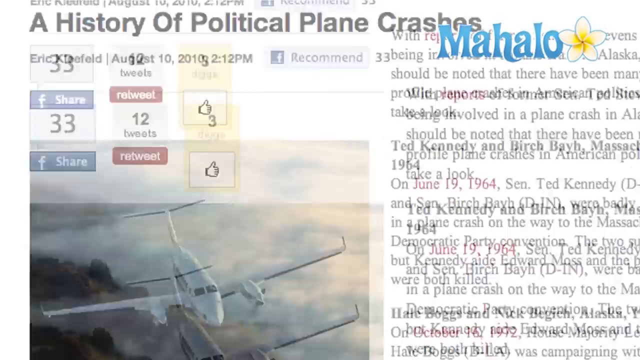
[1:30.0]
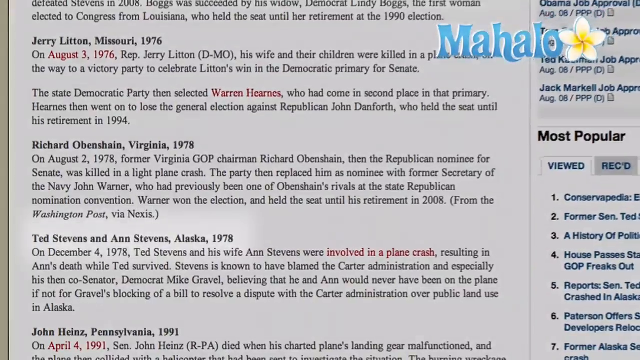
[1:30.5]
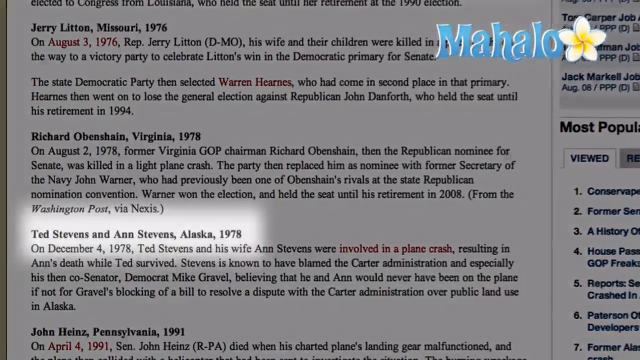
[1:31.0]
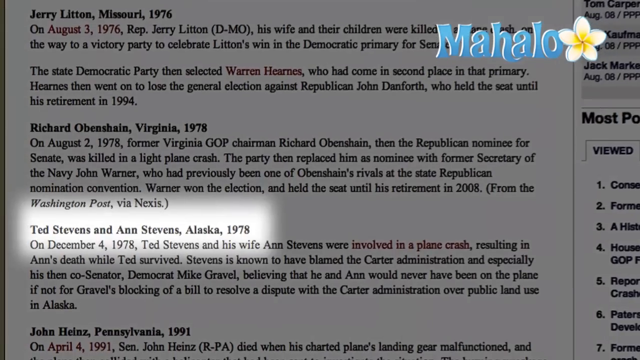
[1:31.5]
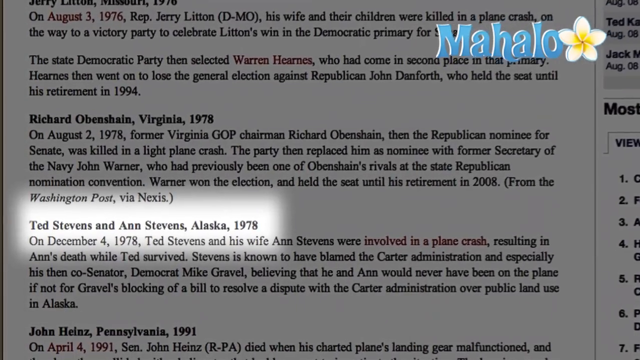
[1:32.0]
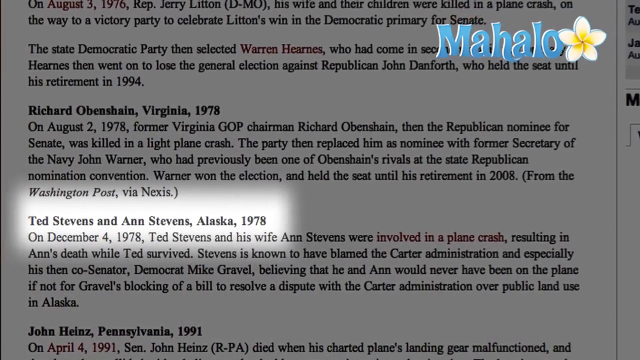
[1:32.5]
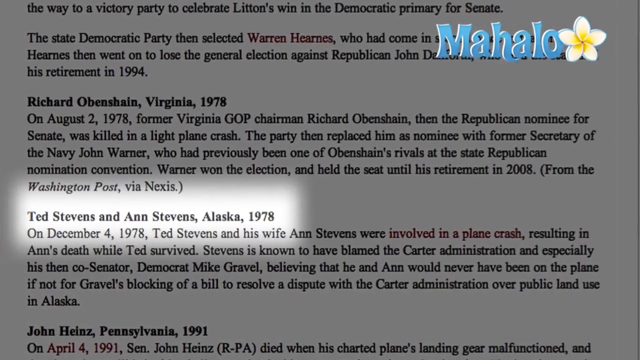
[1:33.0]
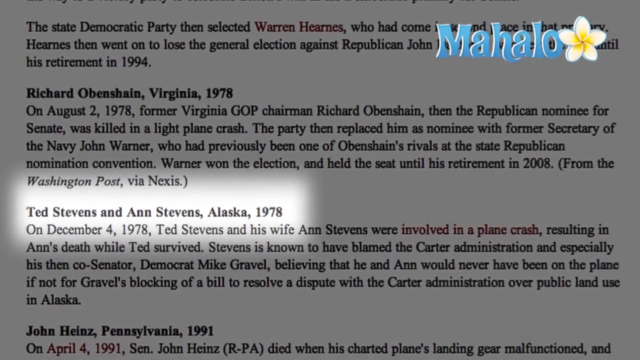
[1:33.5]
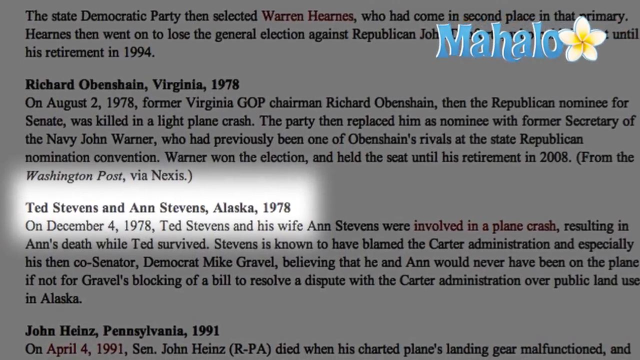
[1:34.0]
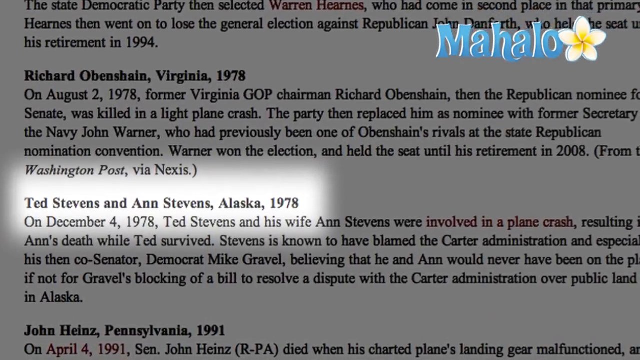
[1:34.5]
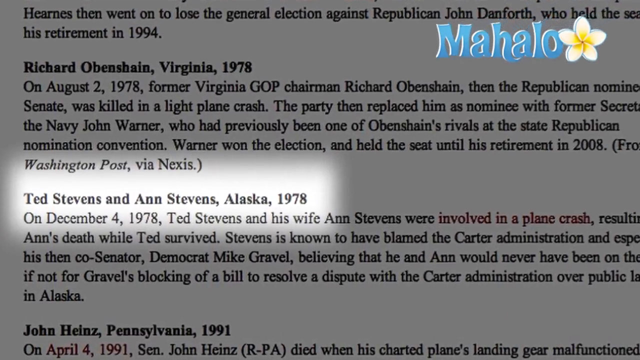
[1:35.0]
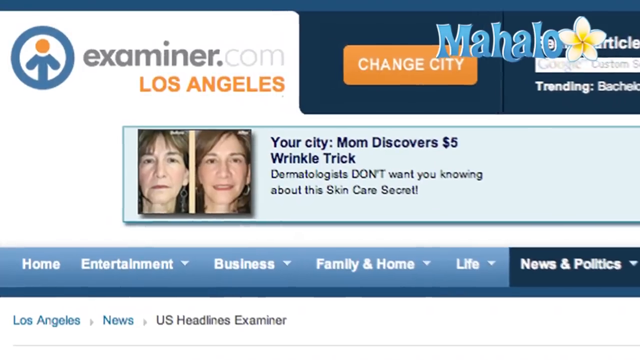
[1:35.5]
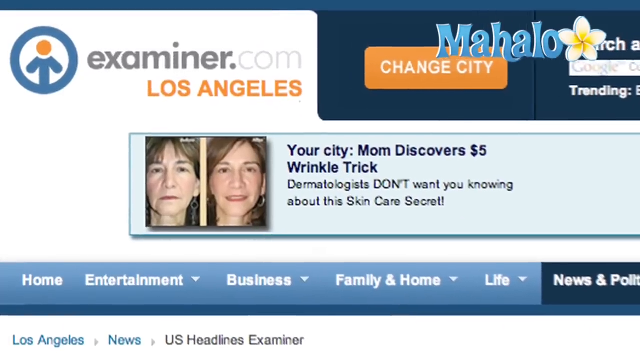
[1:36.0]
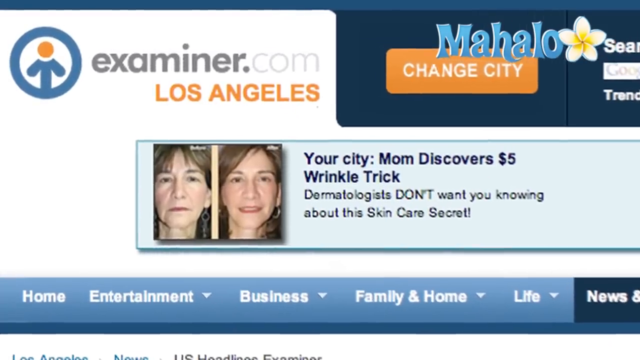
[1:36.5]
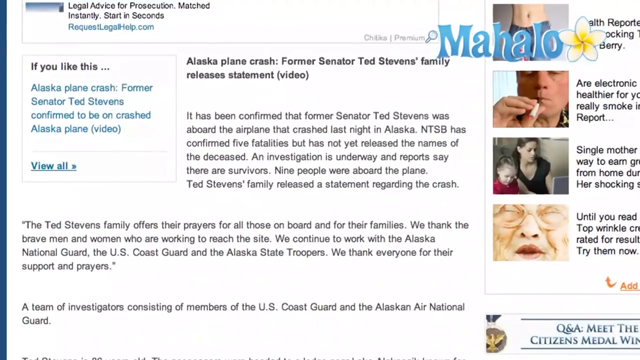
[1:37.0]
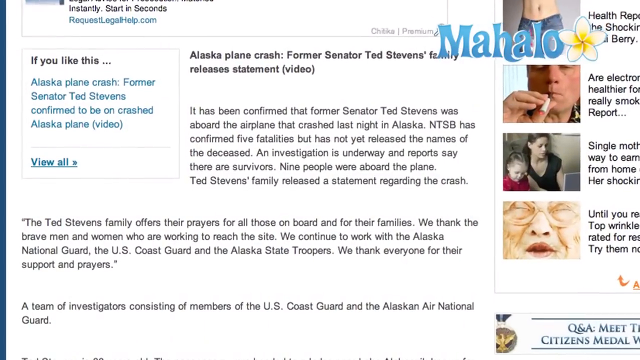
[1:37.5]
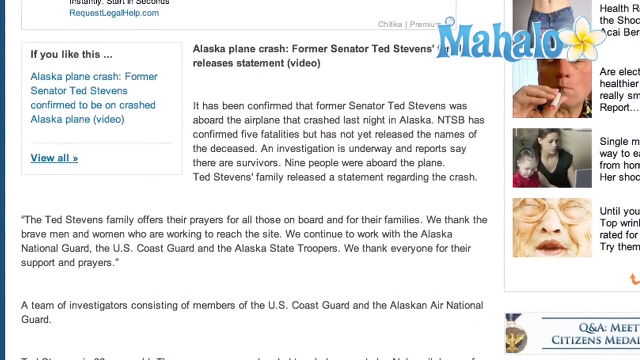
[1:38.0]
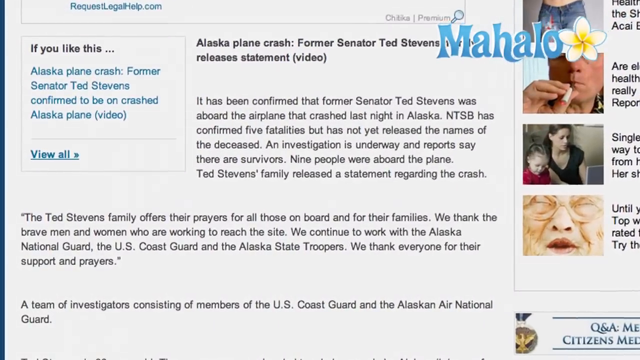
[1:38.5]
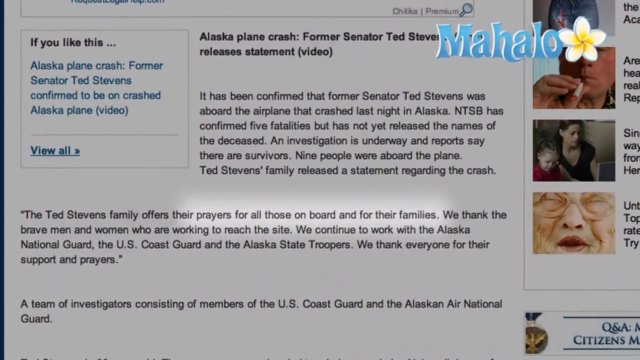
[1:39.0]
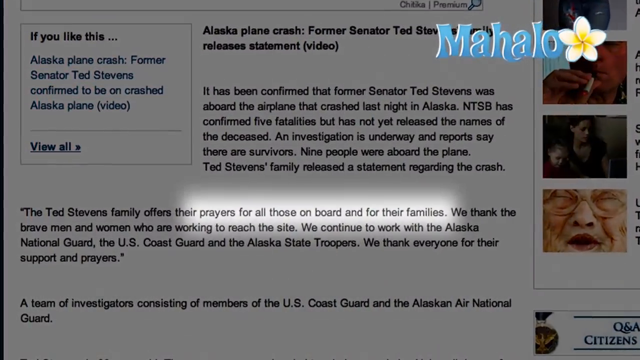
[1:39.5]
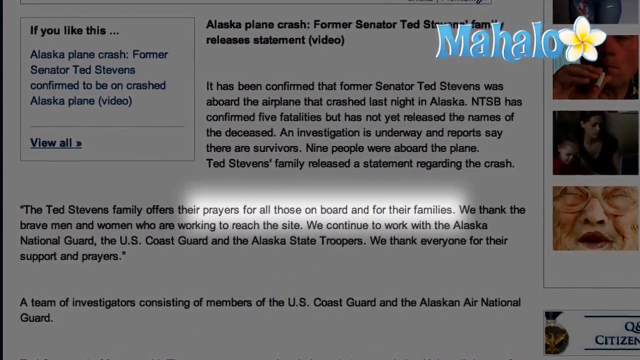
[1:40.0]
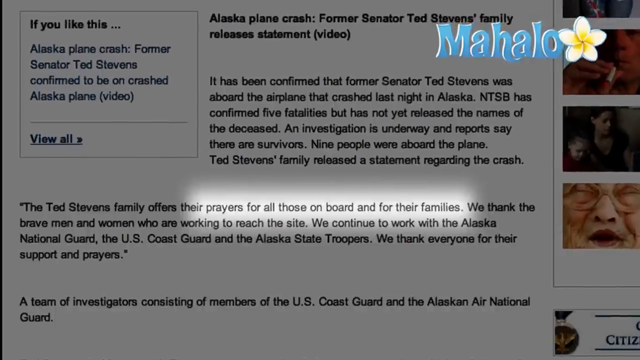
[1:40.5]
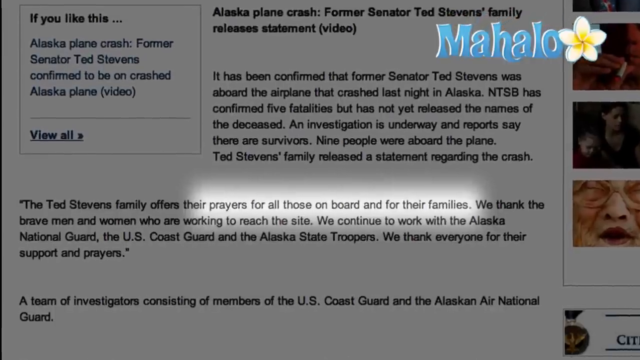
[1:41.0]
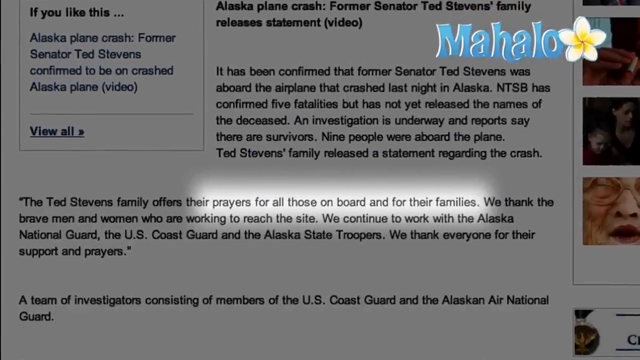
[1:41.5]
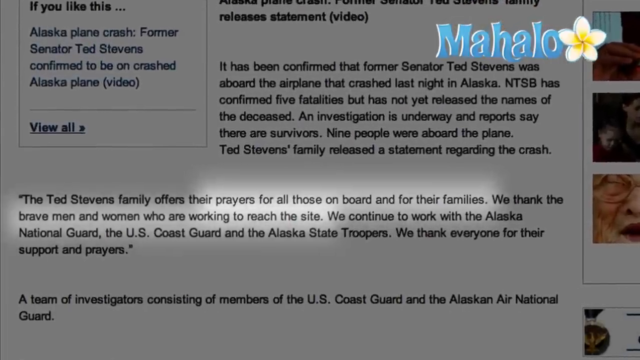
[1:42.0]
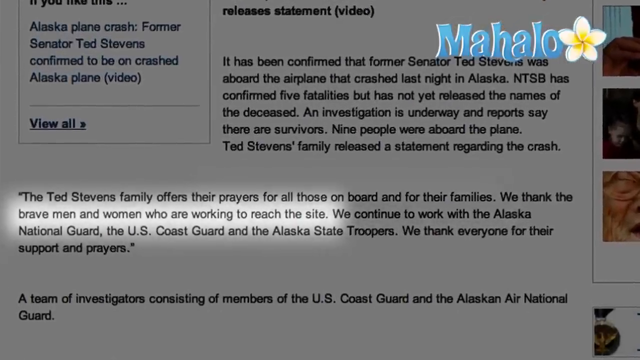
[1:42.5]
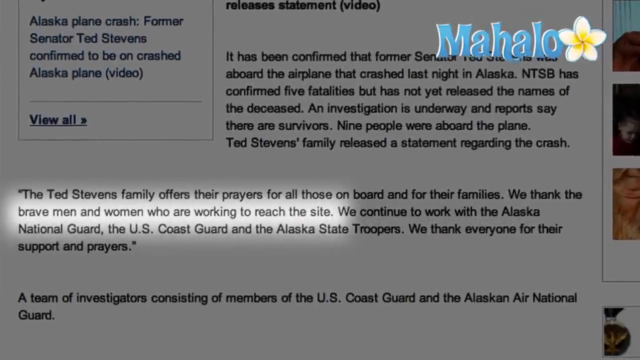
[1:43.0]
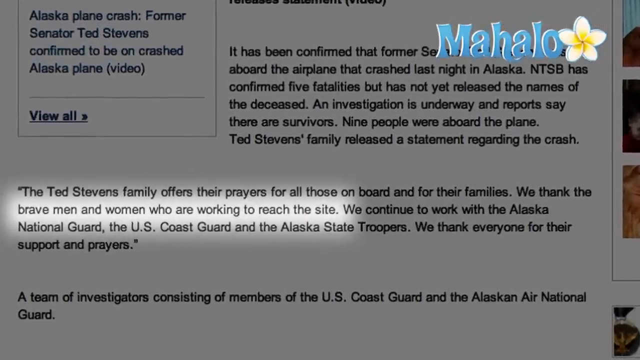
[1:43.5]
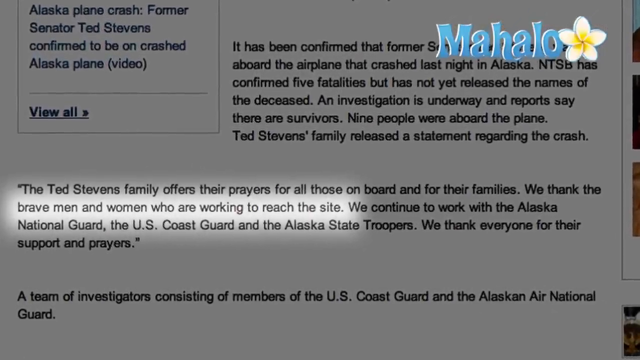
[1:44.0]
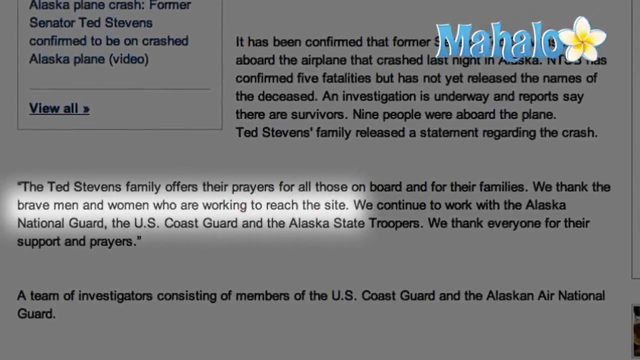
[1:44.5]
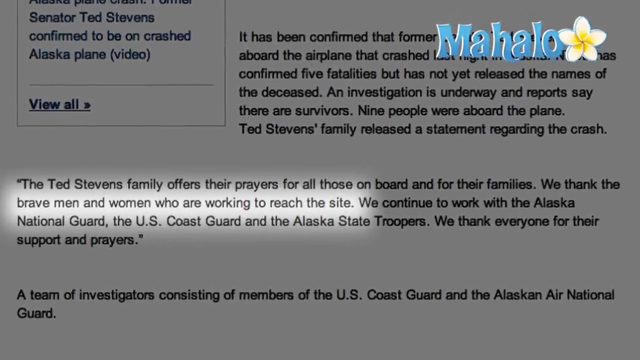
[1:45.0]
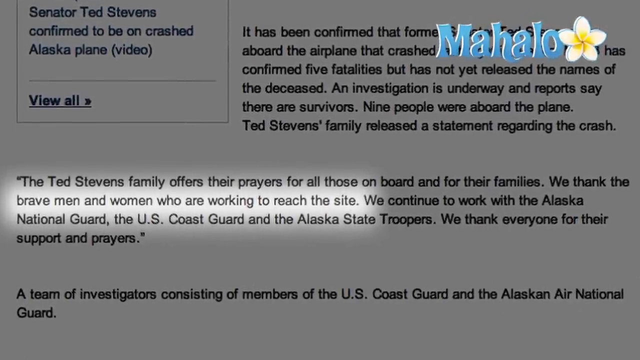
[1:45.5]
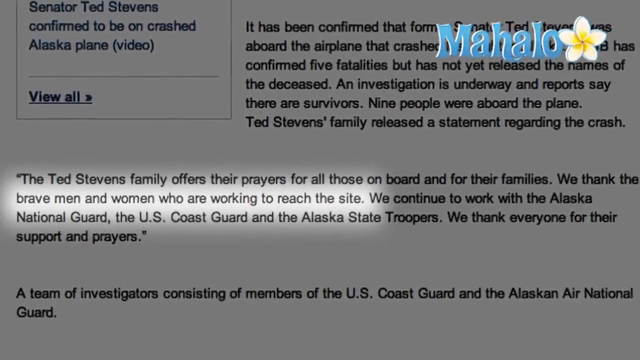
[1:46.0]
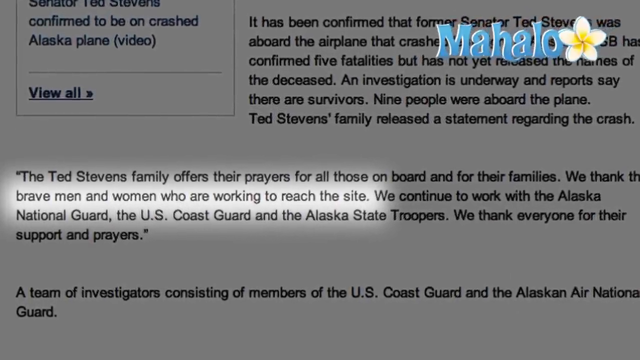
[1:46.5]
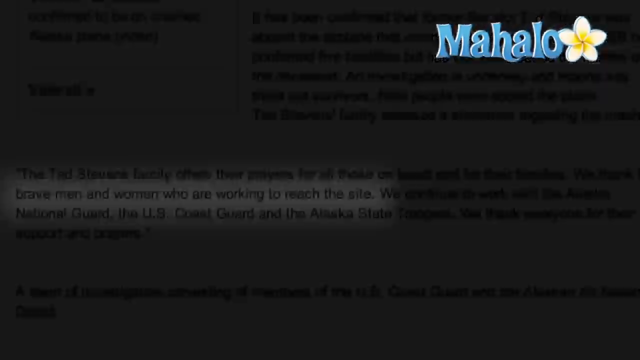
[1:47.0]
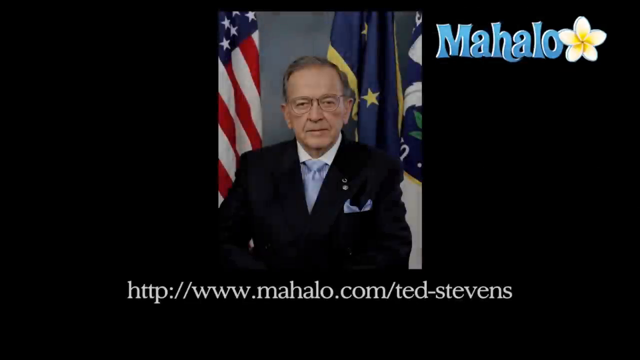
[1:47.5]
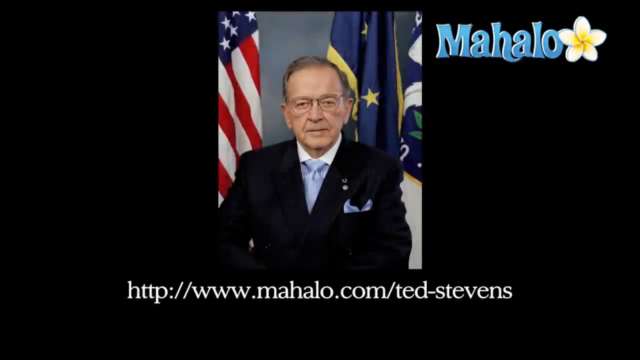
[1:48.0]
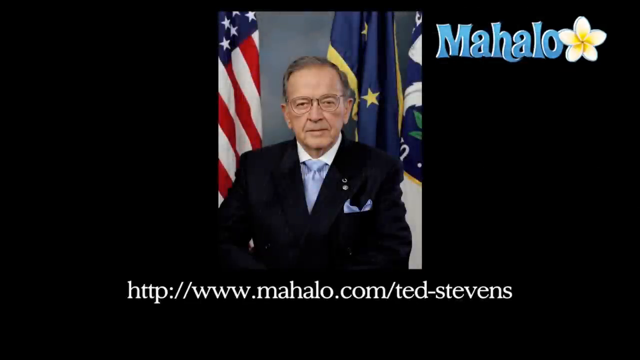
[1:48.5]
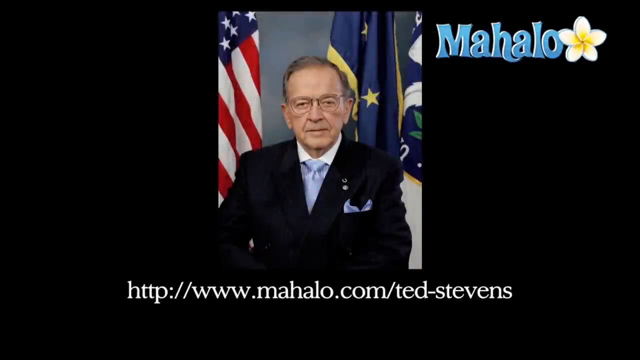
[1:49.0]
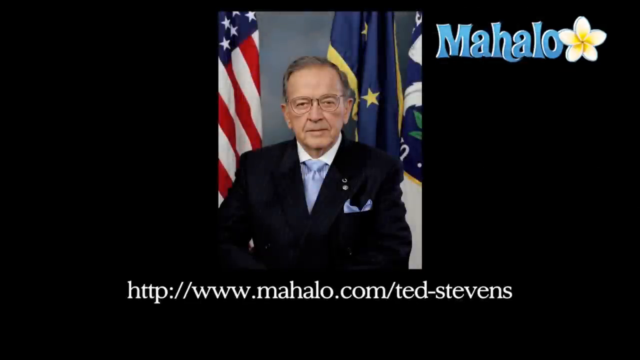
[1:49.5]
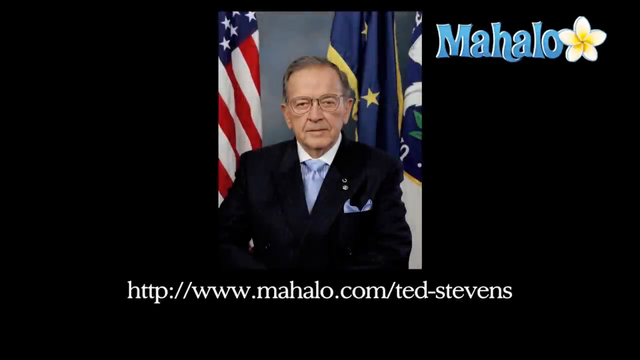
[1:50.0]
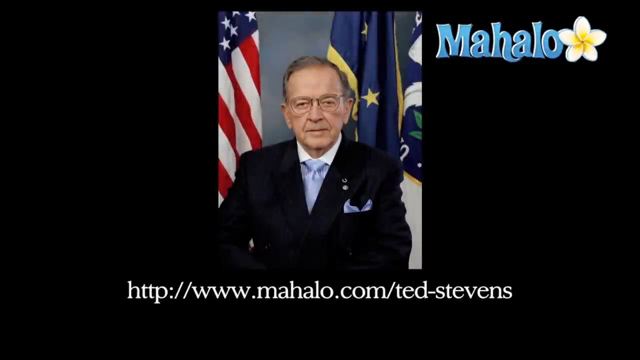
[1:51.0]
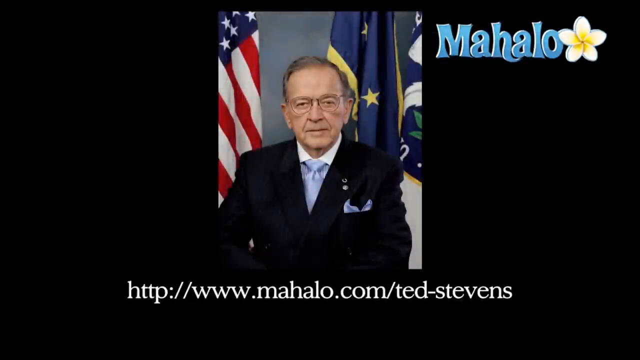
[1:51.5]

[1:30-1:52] An article posted on August 10, 2010, titled "A history of political plane crashes", is shown. The article seems to link a number of political figures to their deaths in plane crashes and pays much of its attention to Ted Stevens and Ann Stevens, who were in a plane crash on December 4, 1978, in which Ann died and Ted survived. It states that Stevens blamed the Carter administration, and especially his then co-senator, Democrat Mike Gravel, believing that he and Ann would never have been on the plane if Gravel had not blocked a bill to resolve a dispute with the Carter administration over public land use in Alaska. The article is shown to be posted on theexaminer.com, Los Angeles, and a section within it reads that the Stevens family offered their prayers to the families of all the other people involved in the accident and thanked the men and women who assisted in trying to get to the accident site. The video concludes with a picture of Ted Stevens, formally dressed in a black suit and white shirt, wearing spectacles and looking focused, with two flags in the background: the flag of the United States of America and the Alaska state flag.